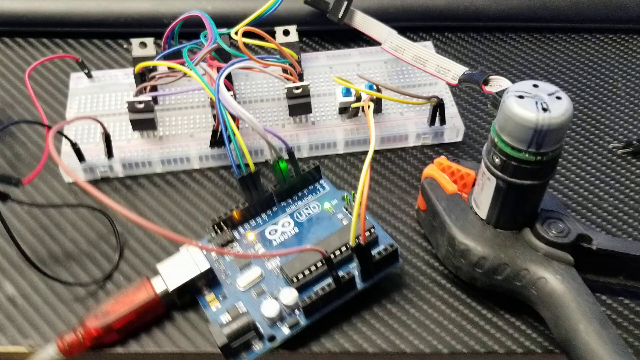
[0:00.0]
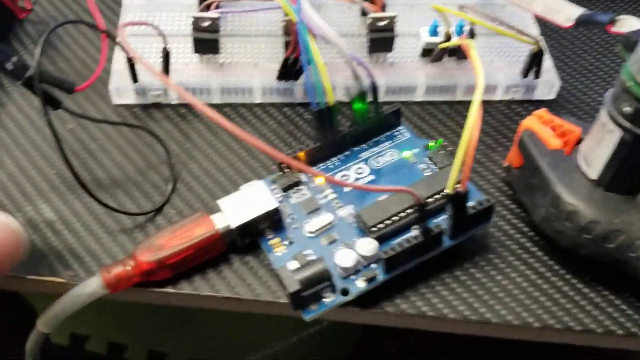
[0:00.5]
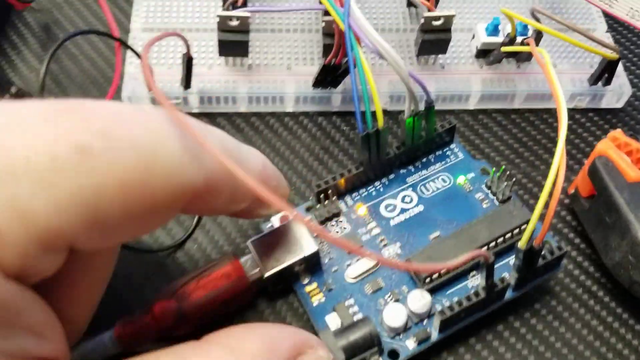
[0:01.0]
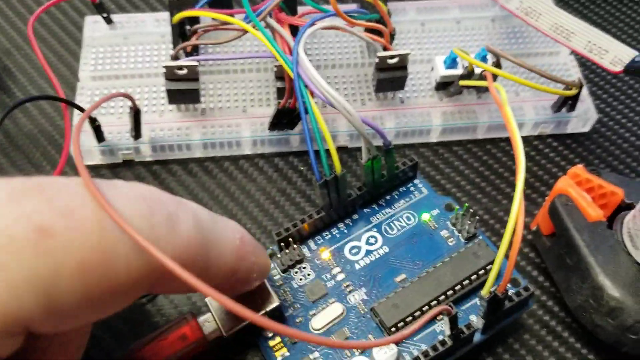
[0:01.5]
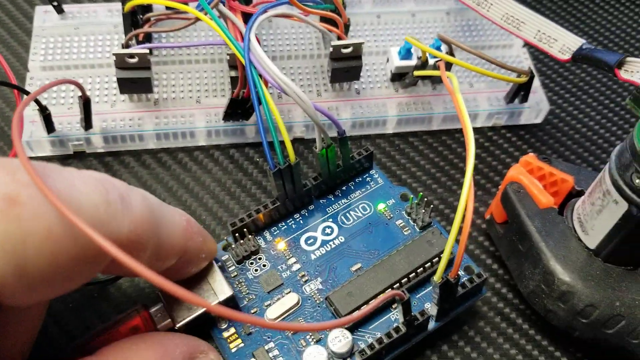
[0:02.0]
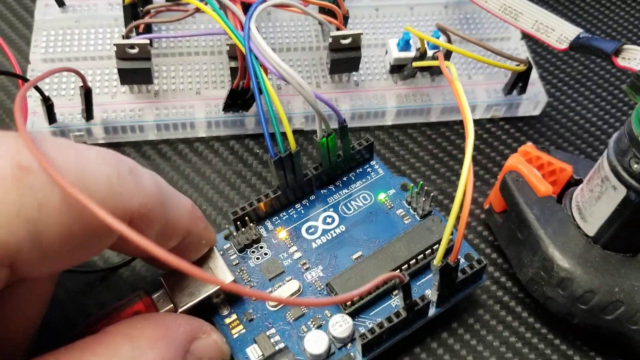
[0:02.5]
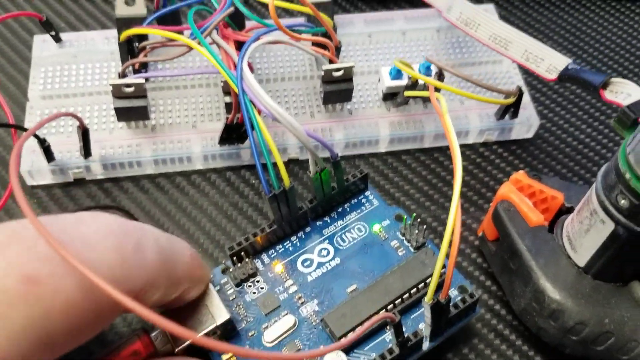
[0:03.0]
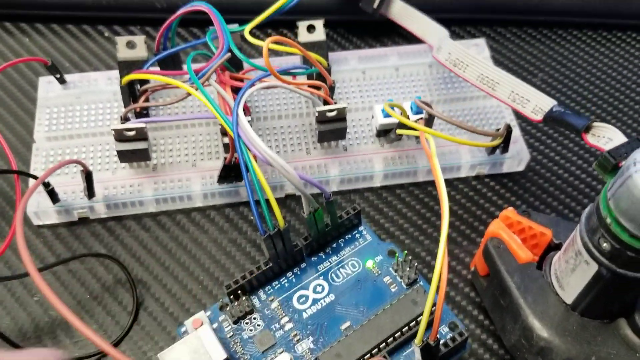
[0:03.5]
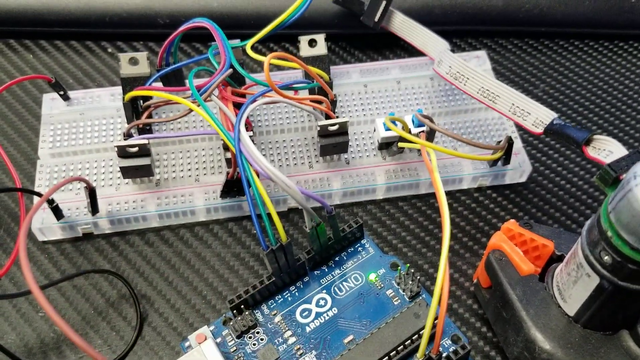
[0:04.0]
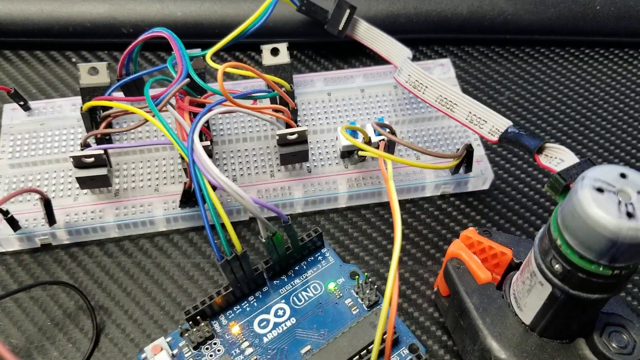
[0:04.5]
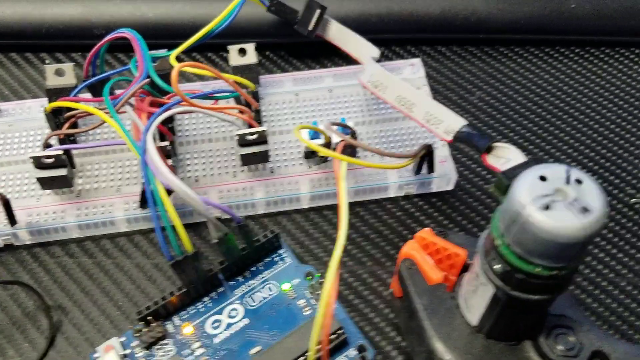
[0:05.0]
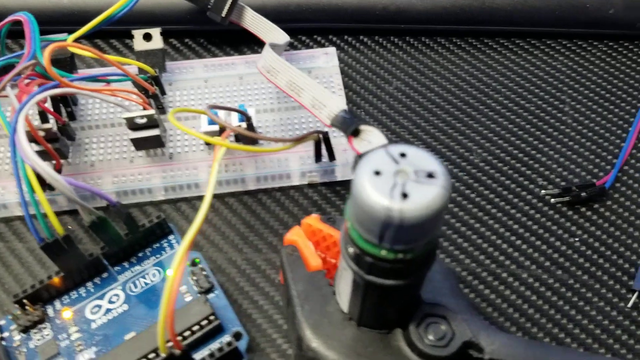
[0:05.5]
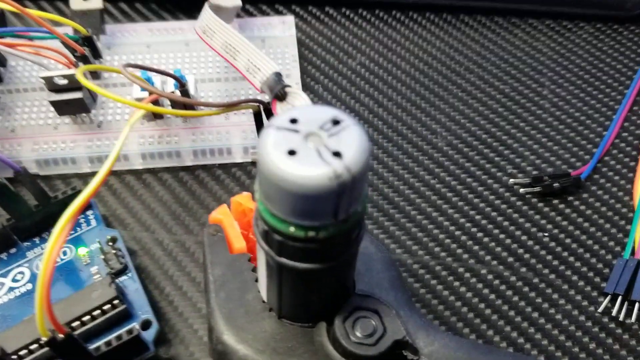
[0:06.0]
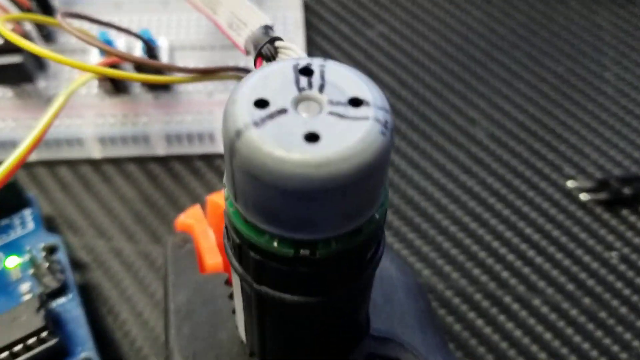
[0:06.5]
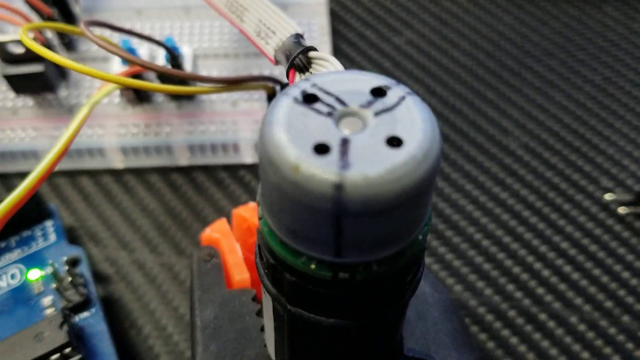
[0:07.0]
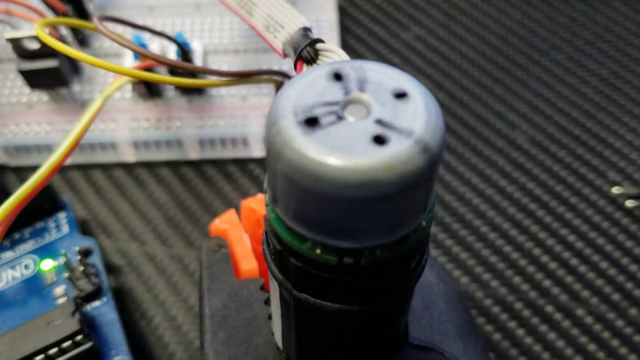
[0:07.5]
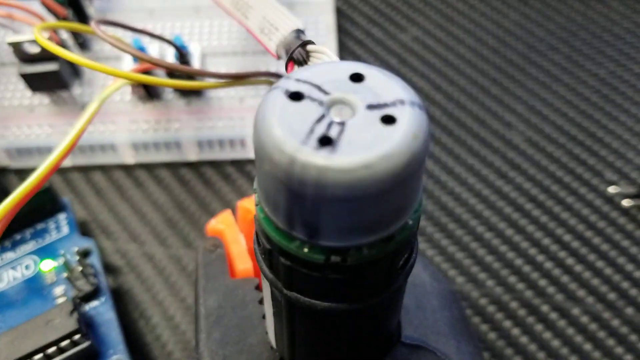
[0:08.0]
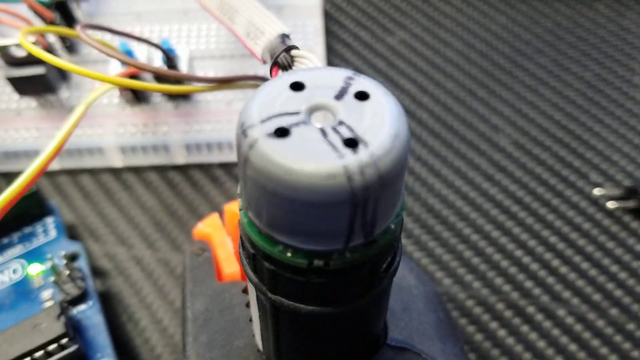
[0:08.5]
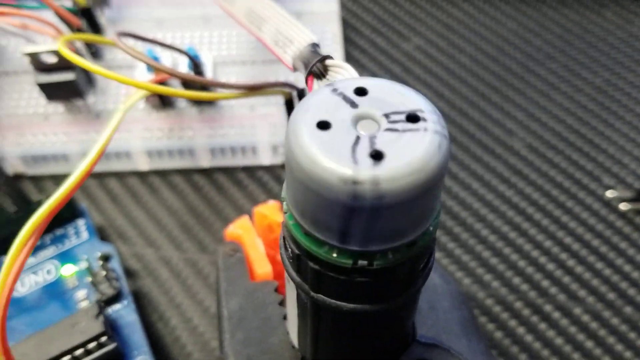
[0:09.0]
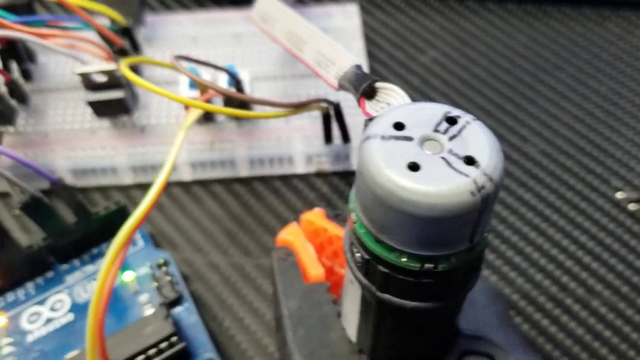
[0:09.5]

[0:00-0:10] Various electronics are strewn about on a table. The table is black and appears to have a textured surface. A hand approaches a blue circuit board that has various cables running out from it: red, yellow, orange, blue, green, white, and black cables run out of it and into other electronics on the table. A red USB is also attached to the blue circuit board. The hand points at the slot on the blue circuit board. The camera then zooms in on another electronic that is rotating counterclockwise; it is being propped up by some pliers.